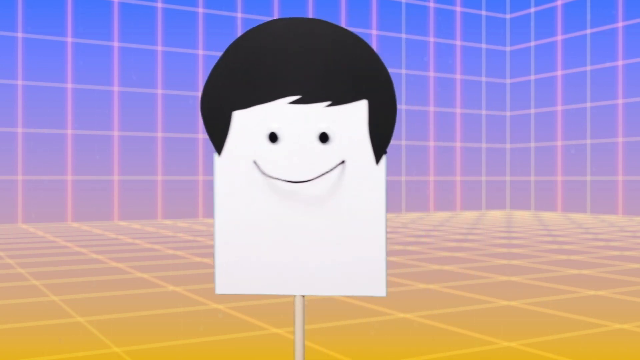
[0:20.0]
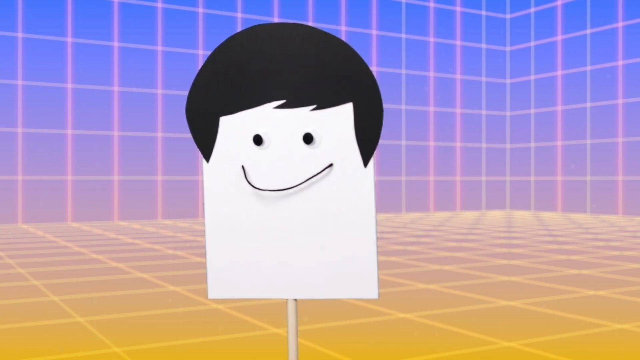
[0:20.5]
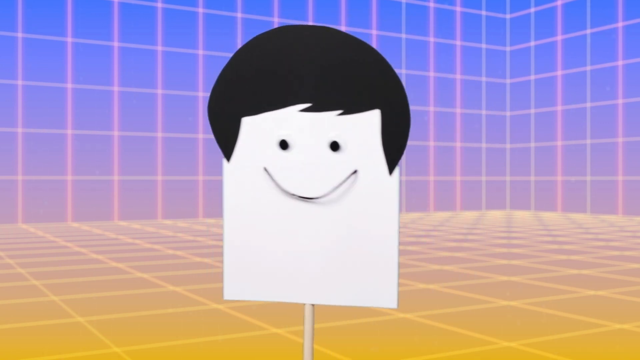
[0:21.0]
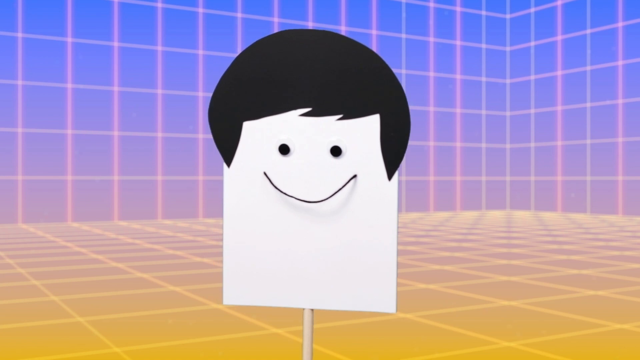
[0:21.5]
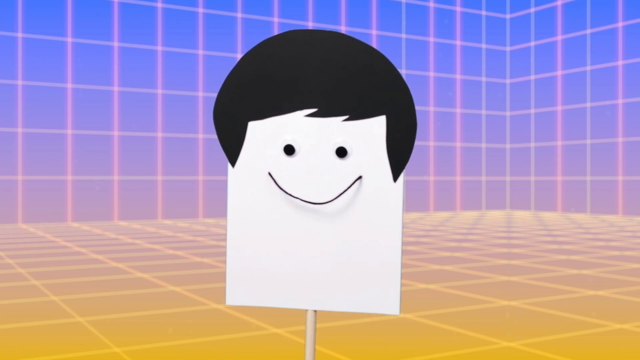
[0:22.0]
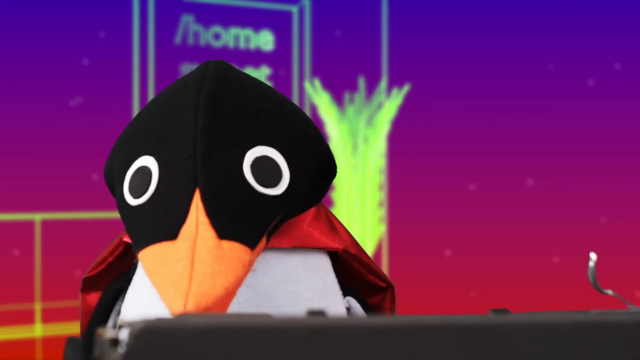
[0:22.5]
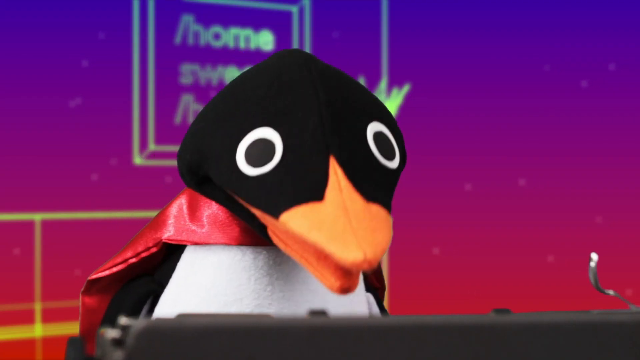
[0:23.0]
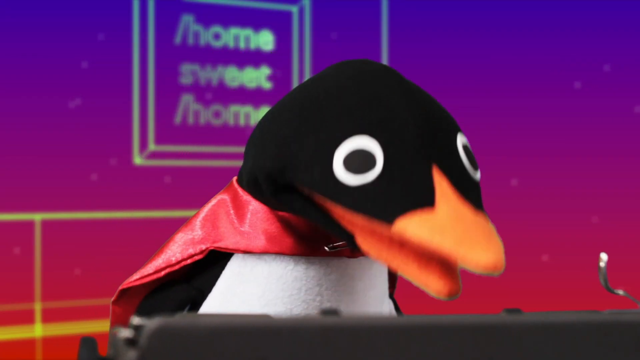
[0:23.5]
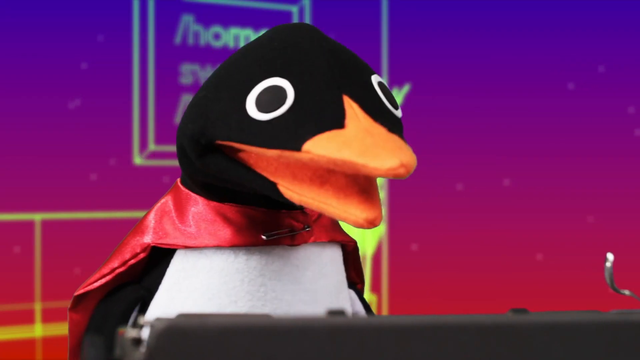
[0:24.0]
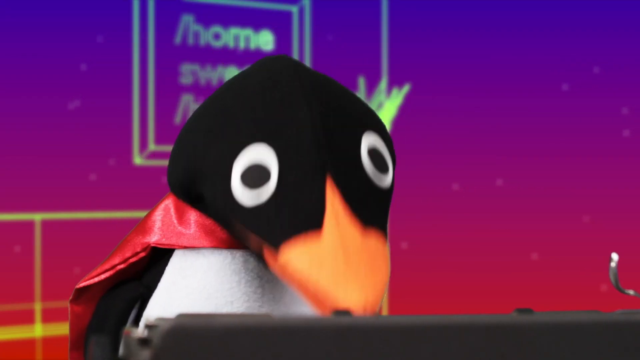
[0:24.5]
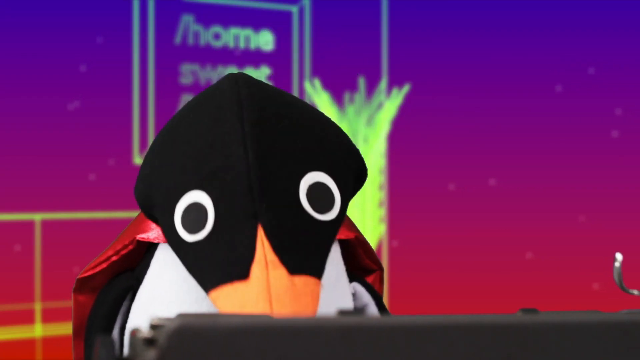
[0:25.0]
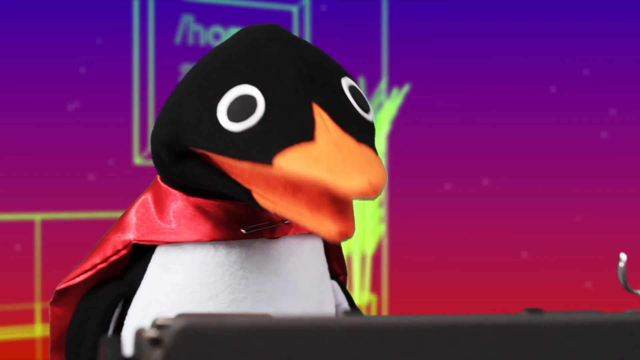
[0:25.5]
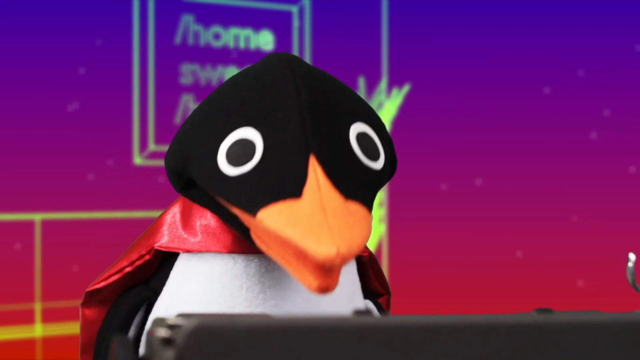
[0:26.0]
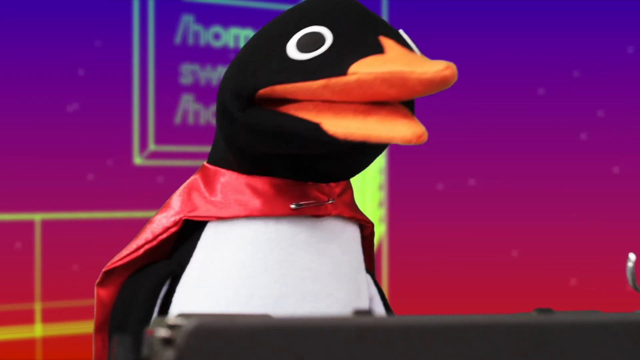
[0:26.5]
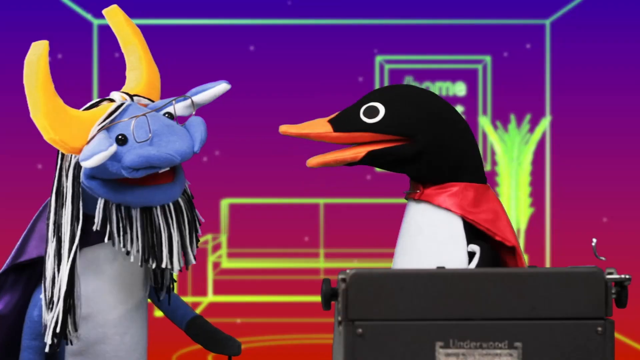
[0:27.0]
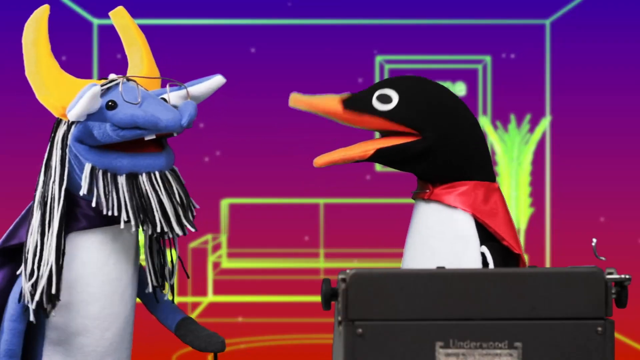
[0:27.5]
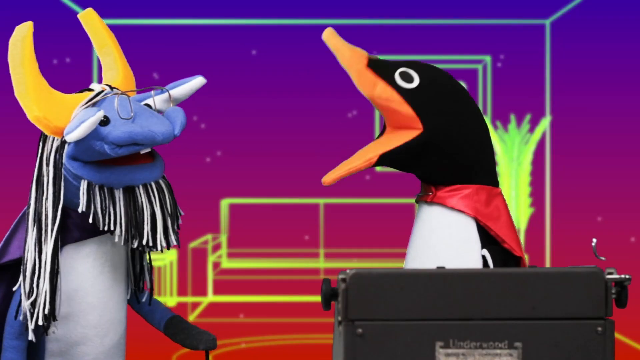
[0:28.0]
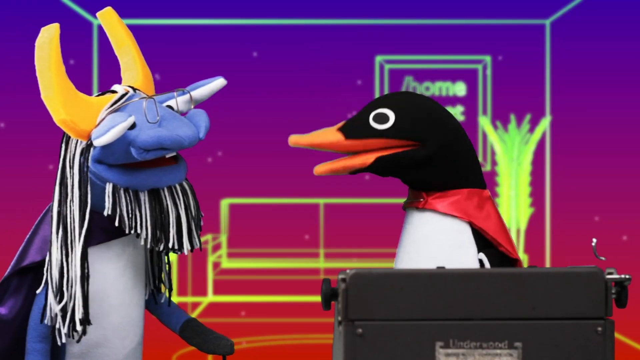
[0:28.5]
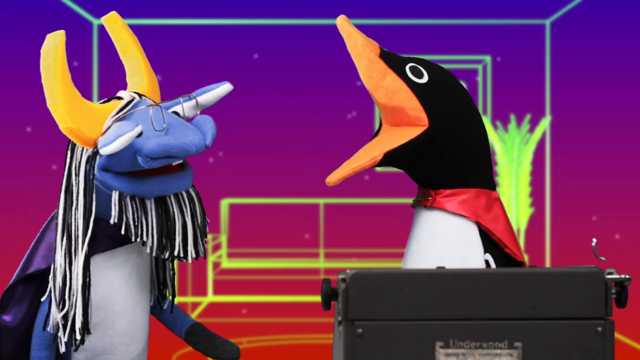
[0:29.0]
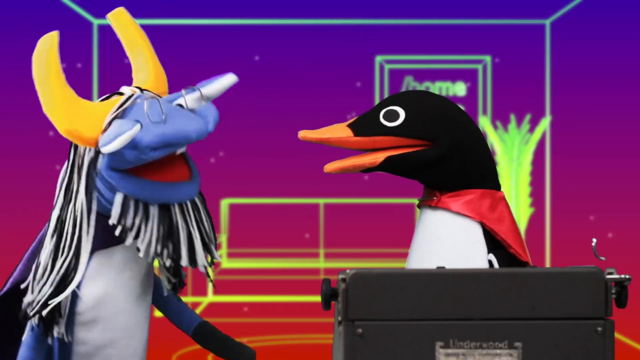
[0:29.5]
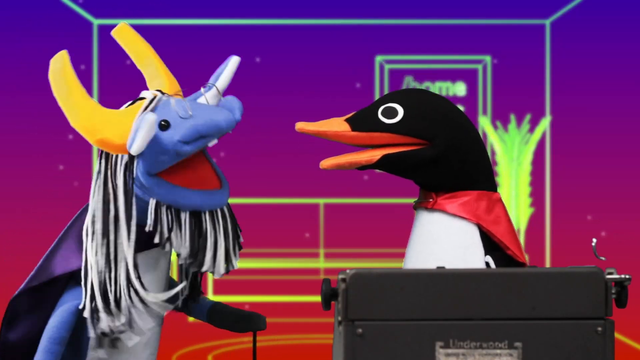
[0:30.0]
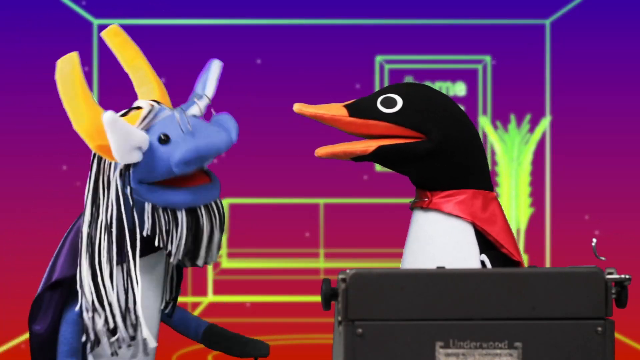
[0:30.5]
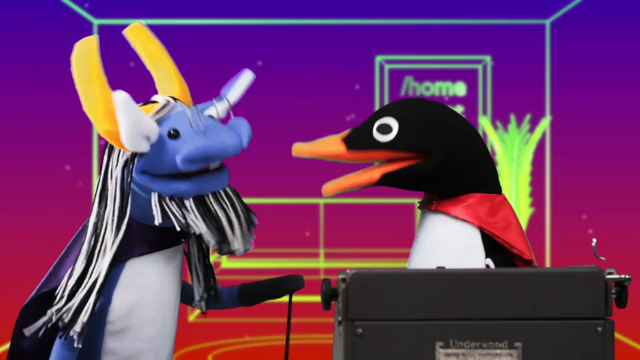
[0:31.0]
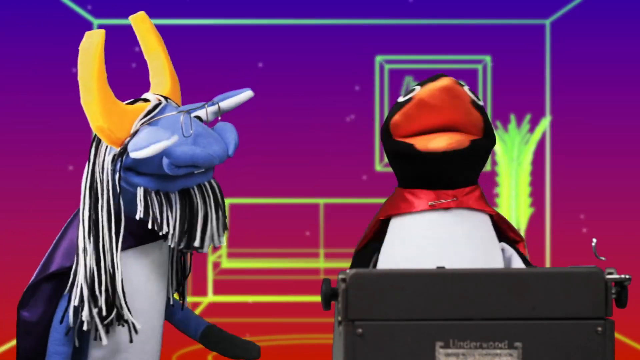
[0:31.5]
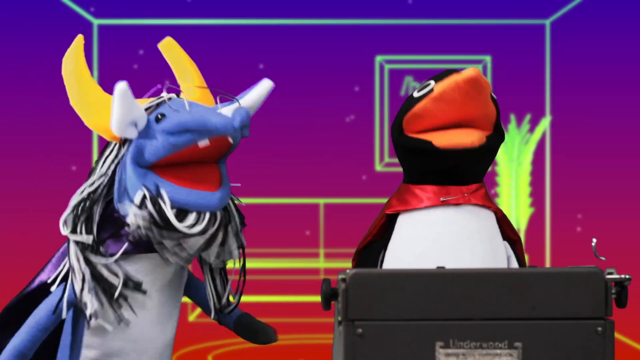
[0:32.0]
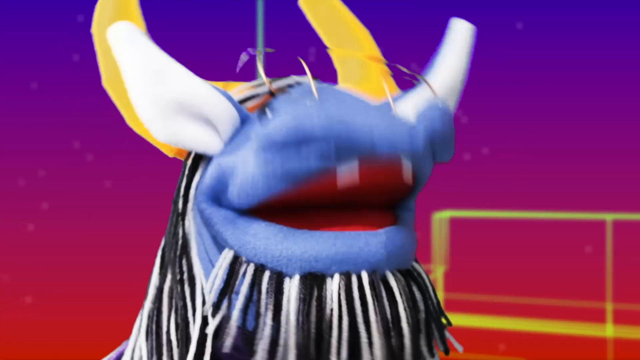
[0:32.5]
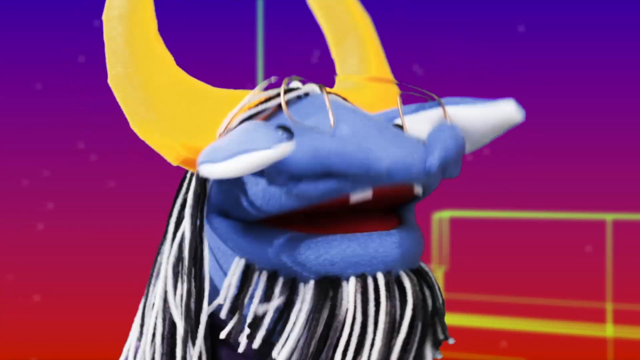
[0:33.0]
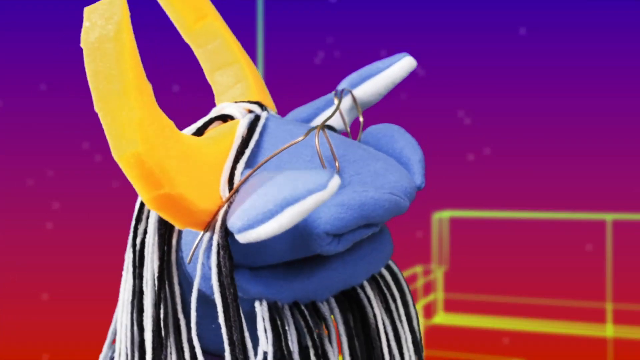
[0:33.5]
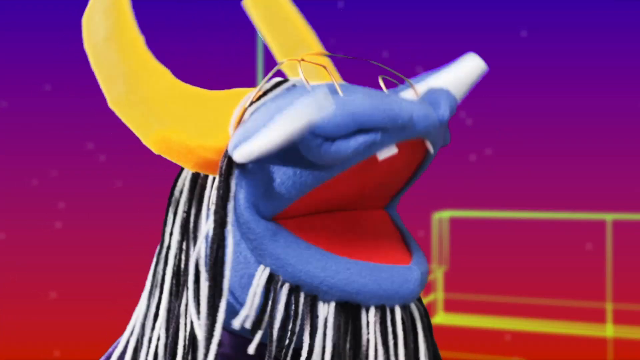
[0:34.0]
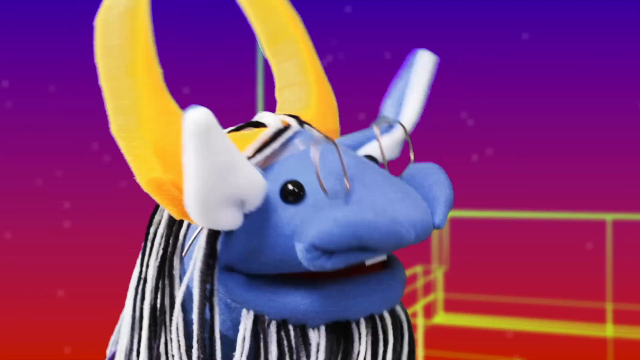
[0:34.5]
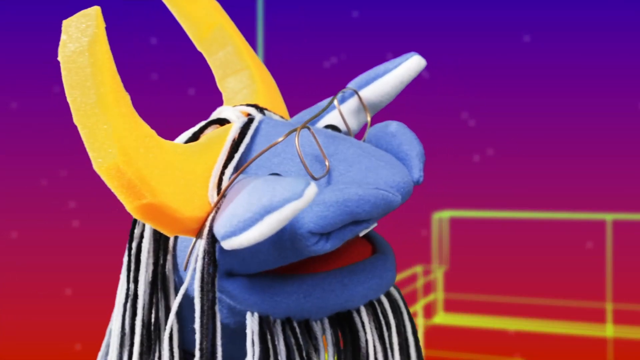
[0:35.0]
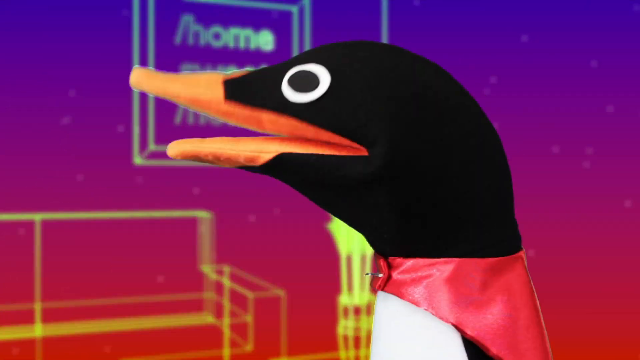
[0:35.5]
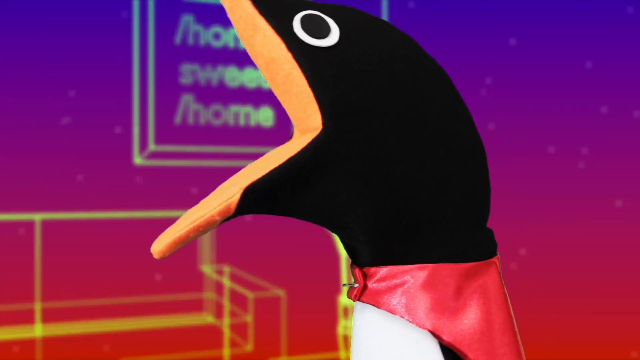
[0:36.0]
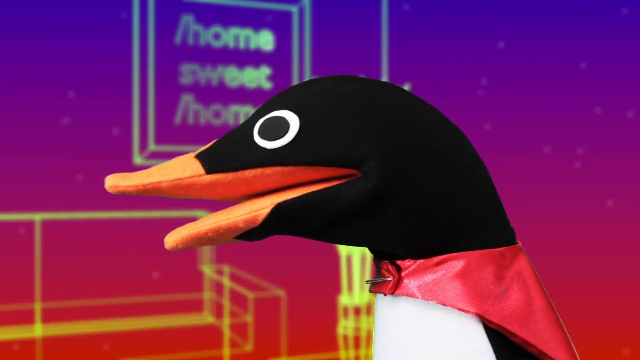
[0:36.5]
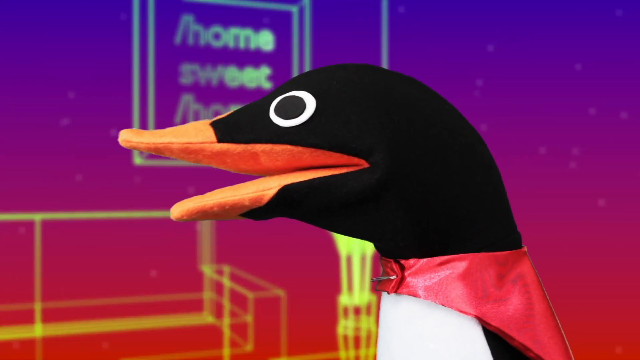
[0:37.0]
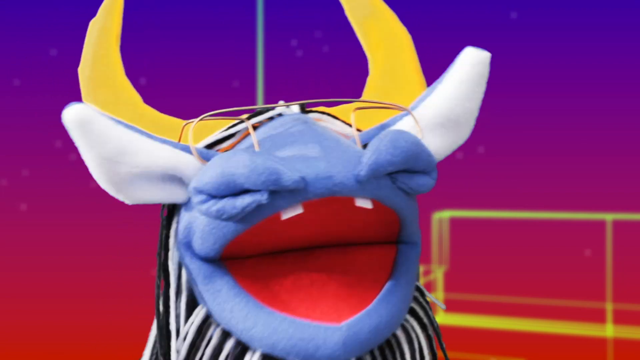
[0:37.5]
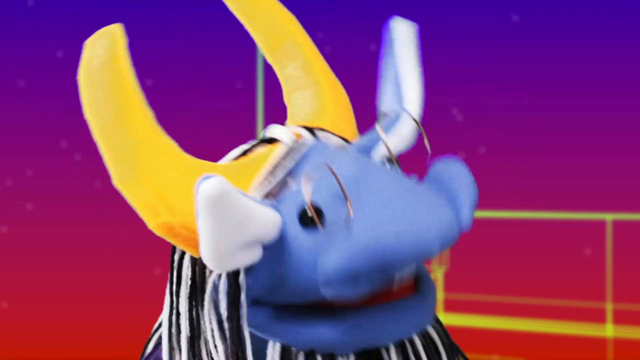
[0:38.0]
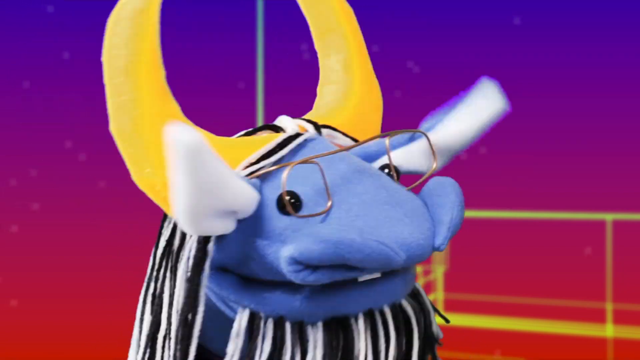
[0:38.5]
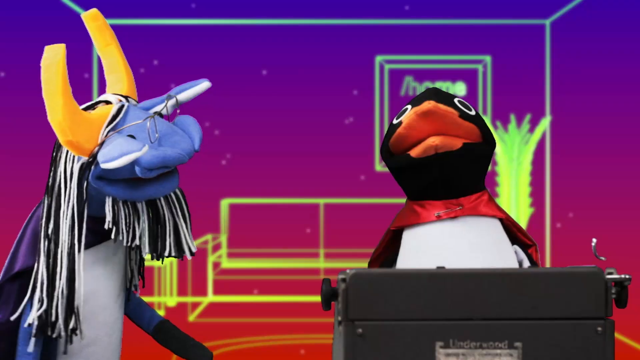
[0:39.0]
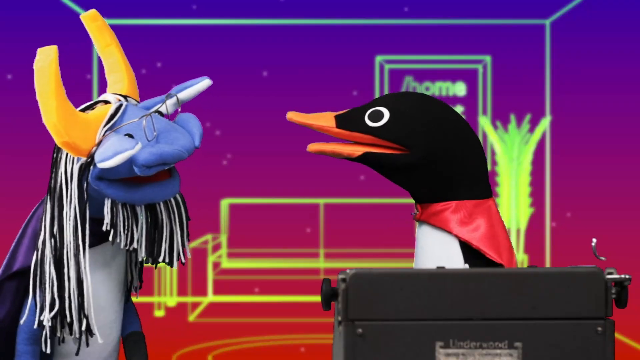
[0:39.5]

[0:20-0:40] A white piece of paper is mounted on a stick like a sign, with two beady black eyes and a smiley face drawn on it and a black hairpiece on top. It is standing against a background that looks like a room, with the floor and walls in a grid pattern. The sign waves back and forth, and its mouth is a piece of yarn dangling on it, moving around as the signpost moves. Next, the penguin nods its head up and down, as if it is maybe speaking. A sign on the wall behind it reads "home sweet home". The penguin has an orange beak.